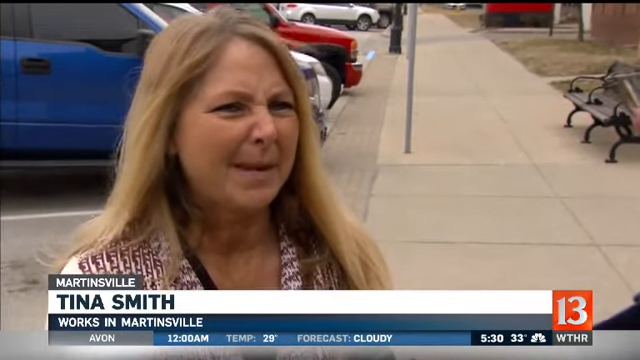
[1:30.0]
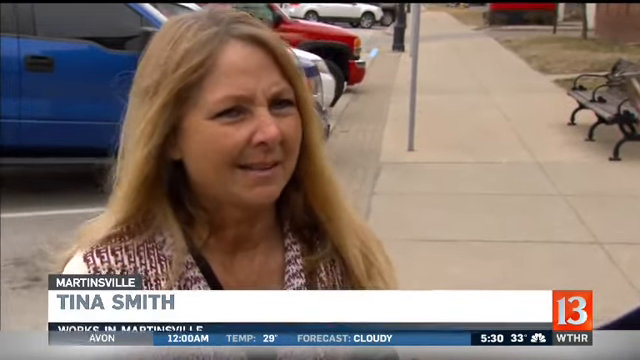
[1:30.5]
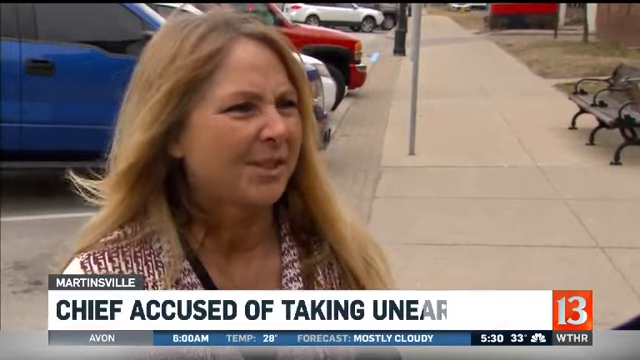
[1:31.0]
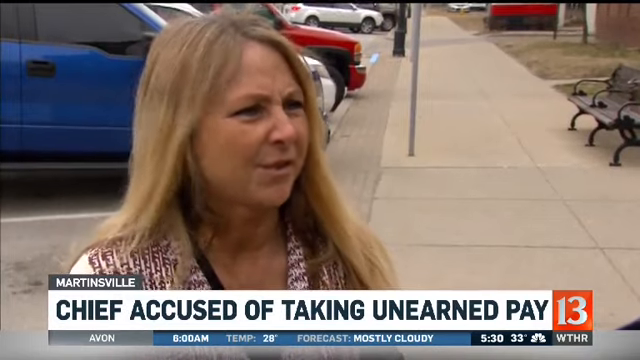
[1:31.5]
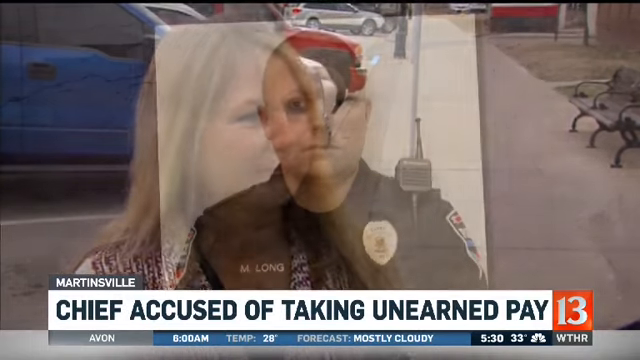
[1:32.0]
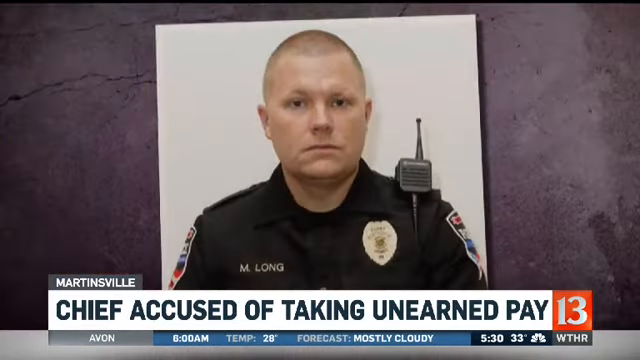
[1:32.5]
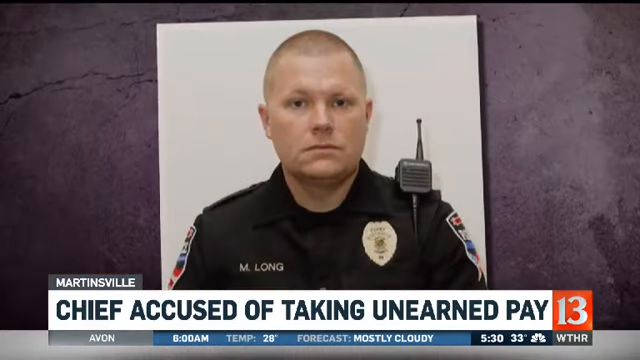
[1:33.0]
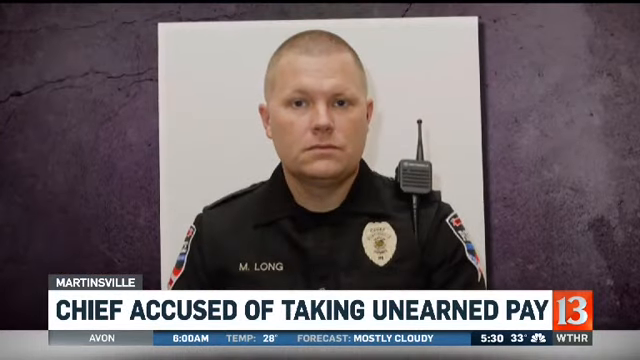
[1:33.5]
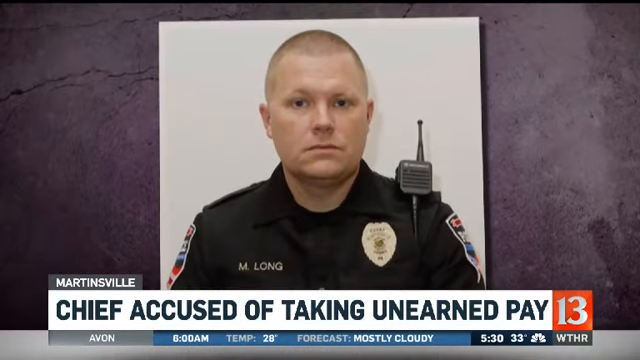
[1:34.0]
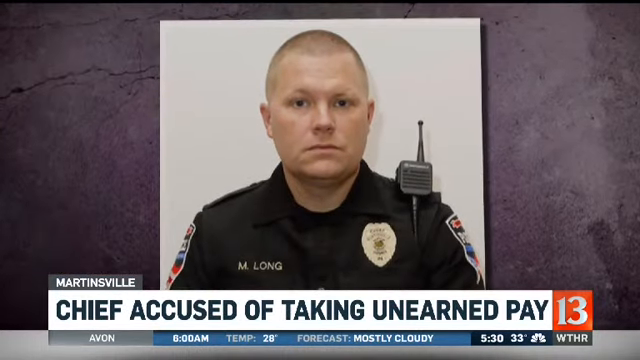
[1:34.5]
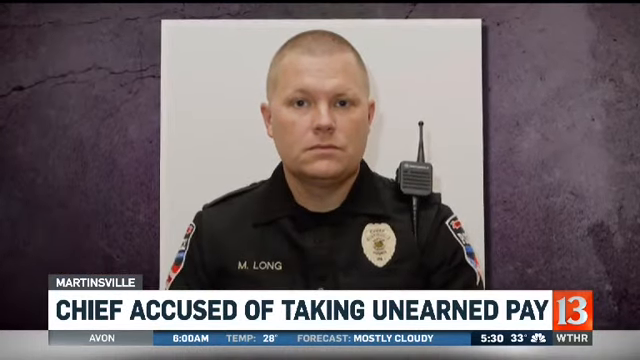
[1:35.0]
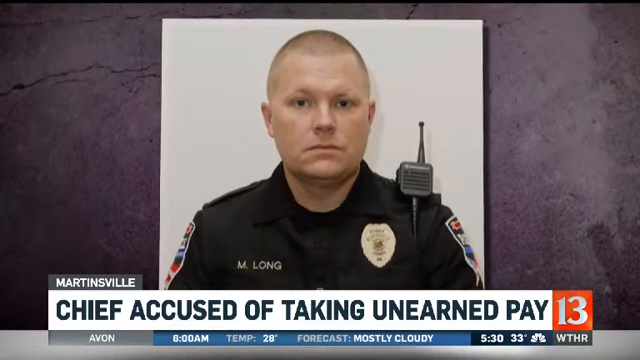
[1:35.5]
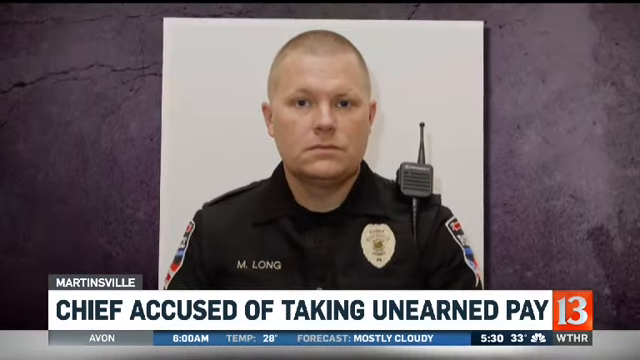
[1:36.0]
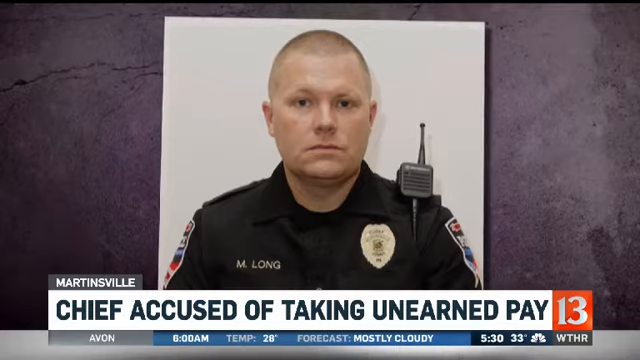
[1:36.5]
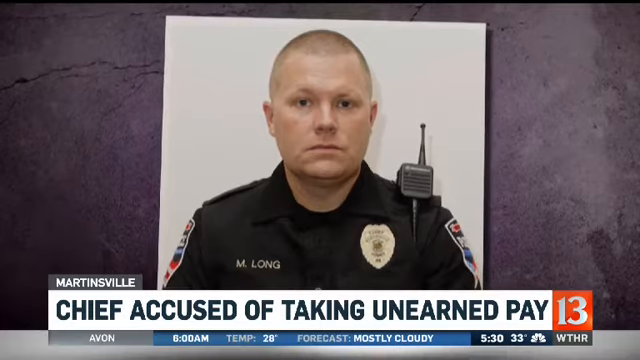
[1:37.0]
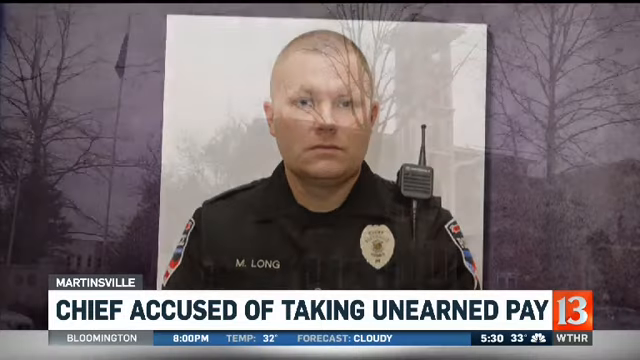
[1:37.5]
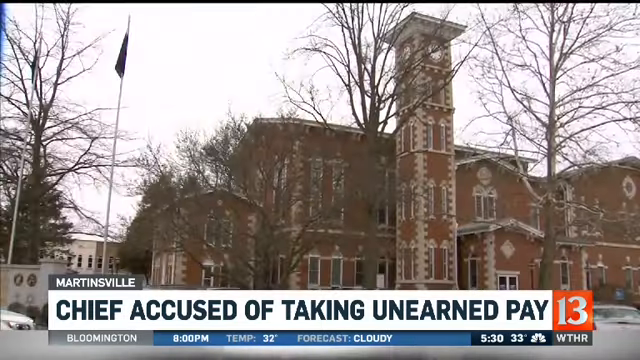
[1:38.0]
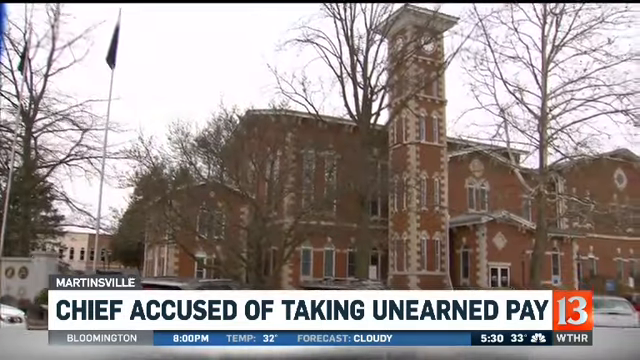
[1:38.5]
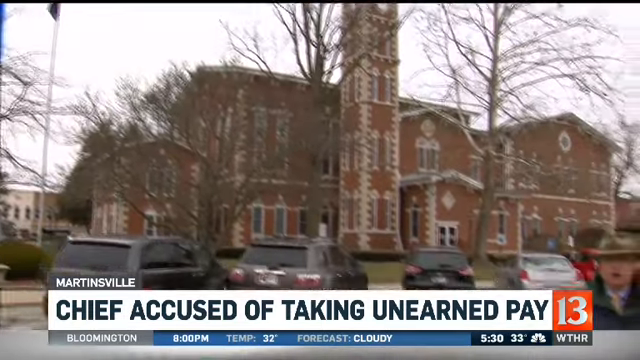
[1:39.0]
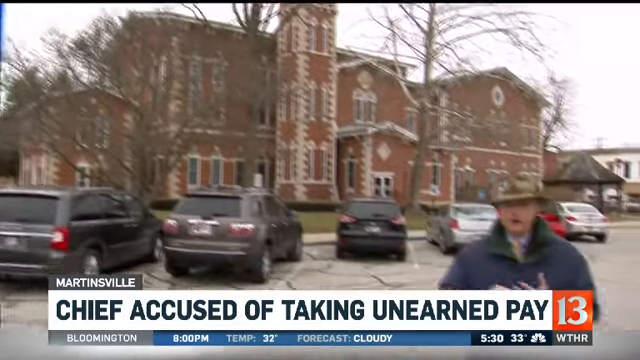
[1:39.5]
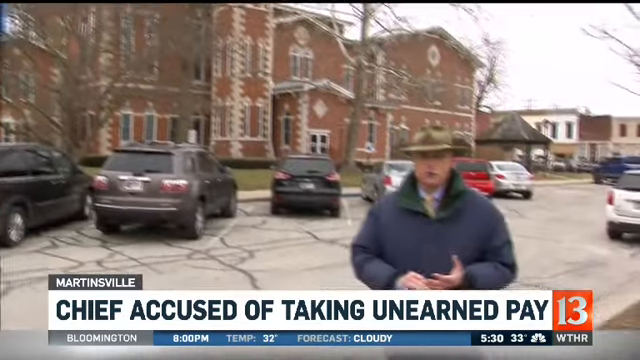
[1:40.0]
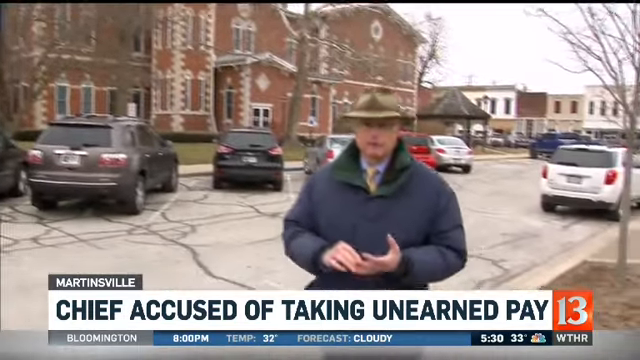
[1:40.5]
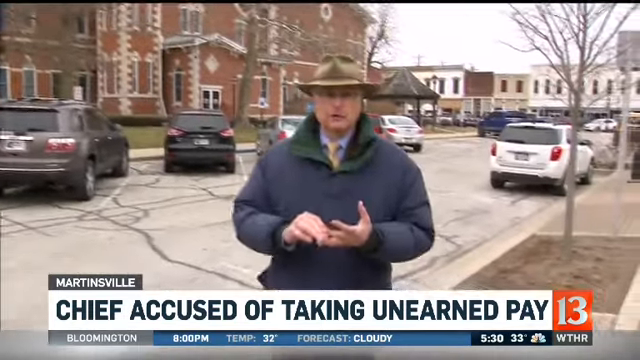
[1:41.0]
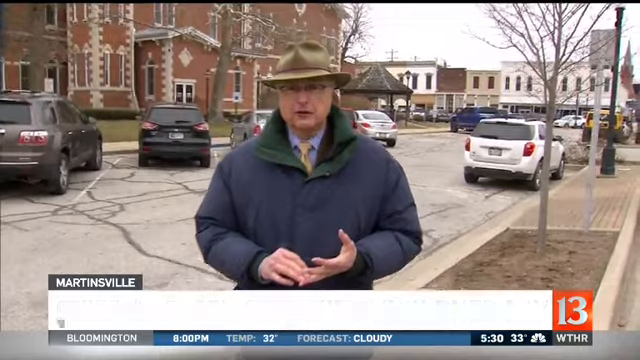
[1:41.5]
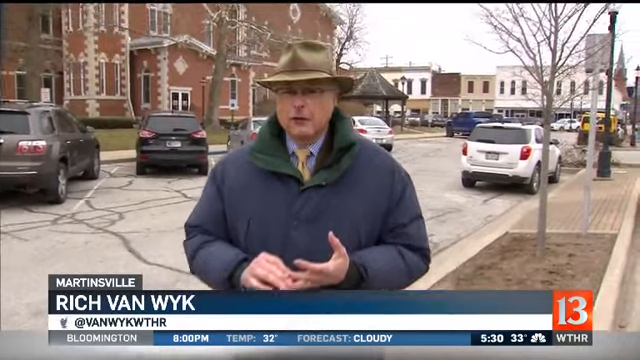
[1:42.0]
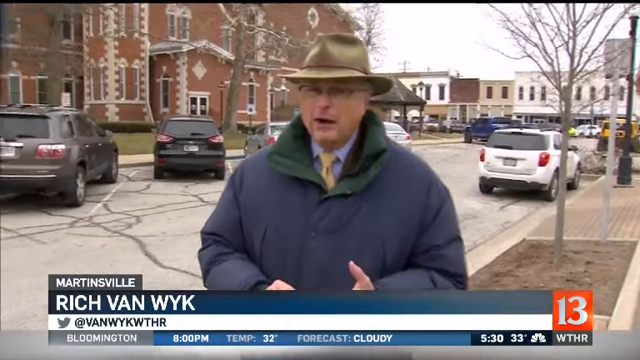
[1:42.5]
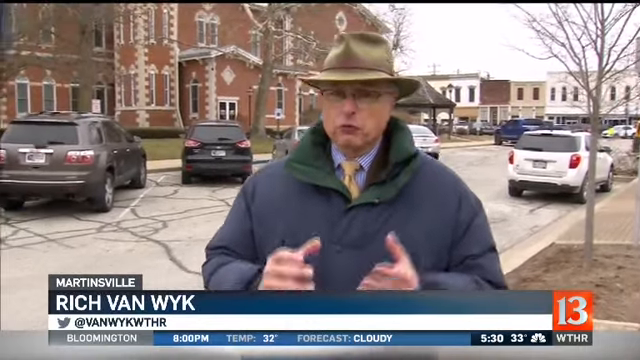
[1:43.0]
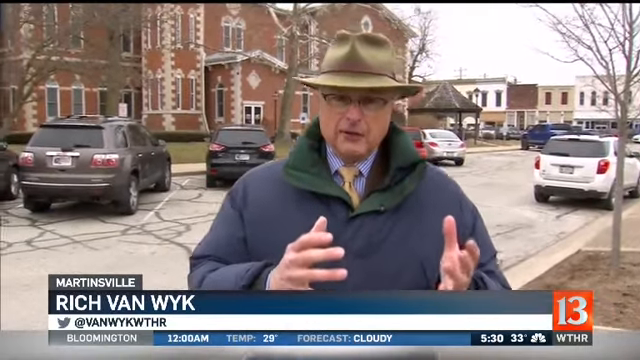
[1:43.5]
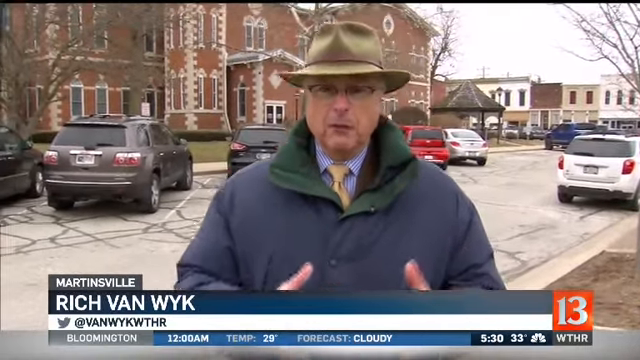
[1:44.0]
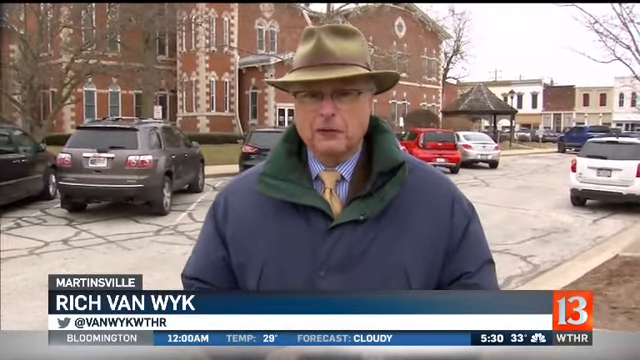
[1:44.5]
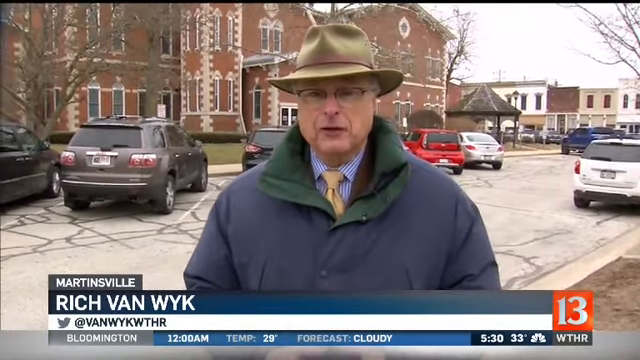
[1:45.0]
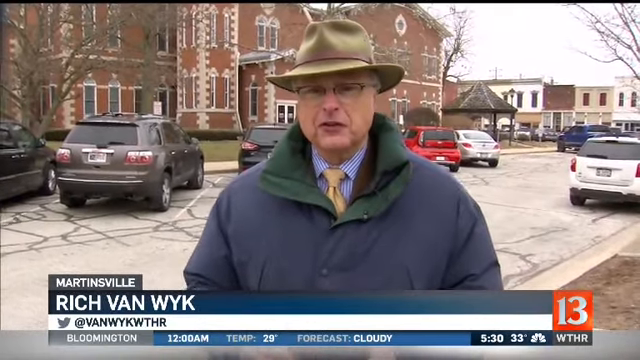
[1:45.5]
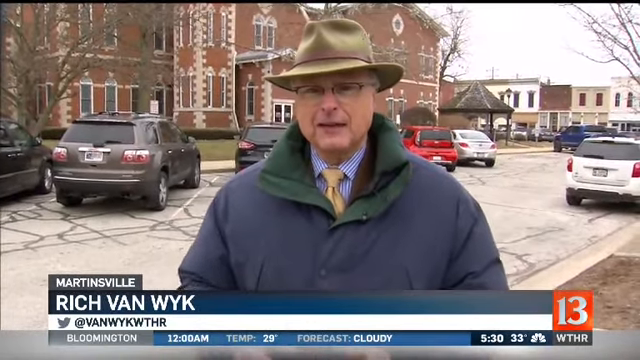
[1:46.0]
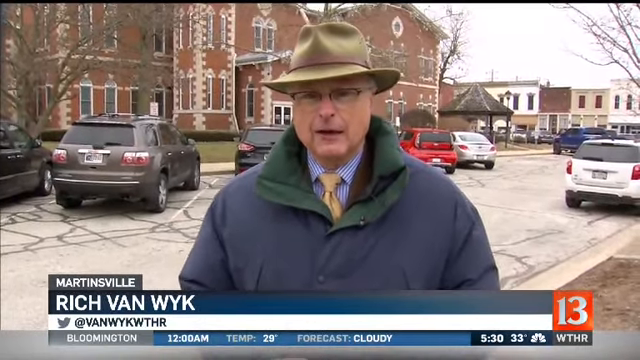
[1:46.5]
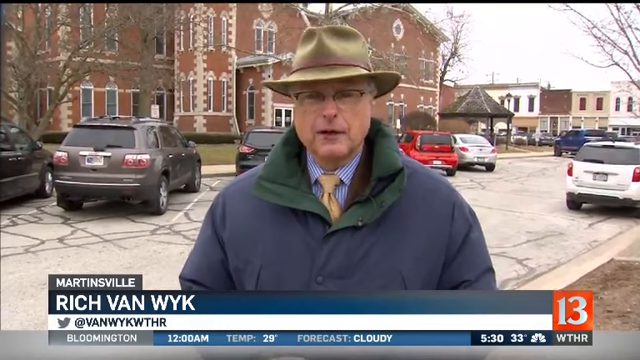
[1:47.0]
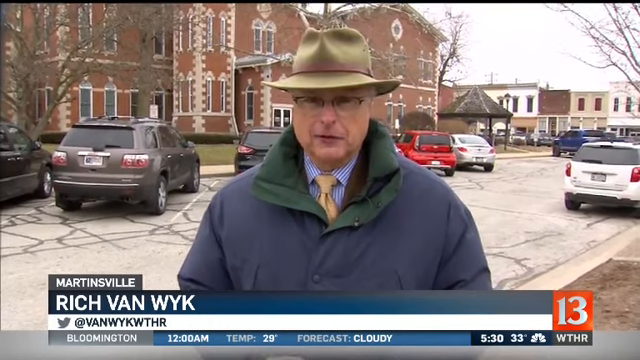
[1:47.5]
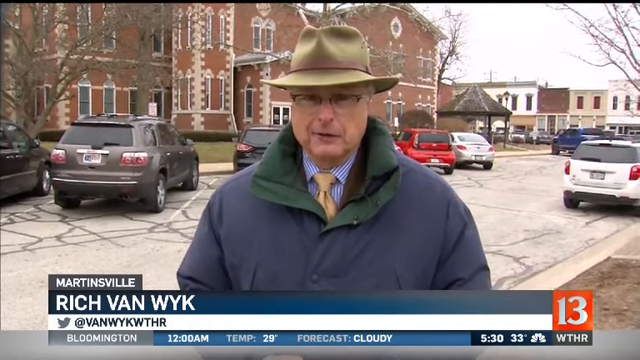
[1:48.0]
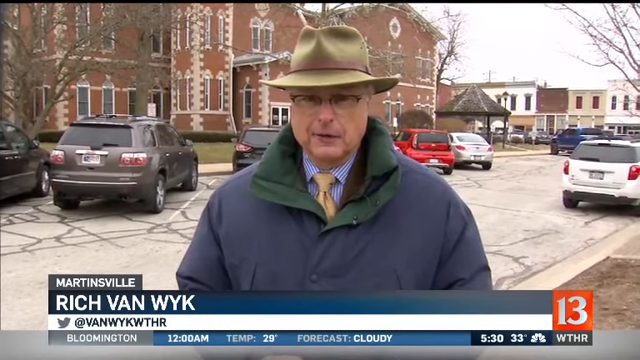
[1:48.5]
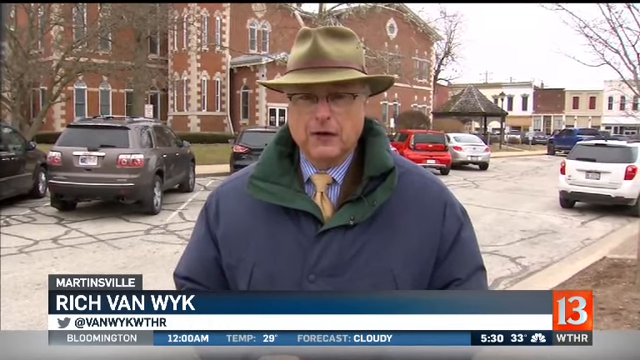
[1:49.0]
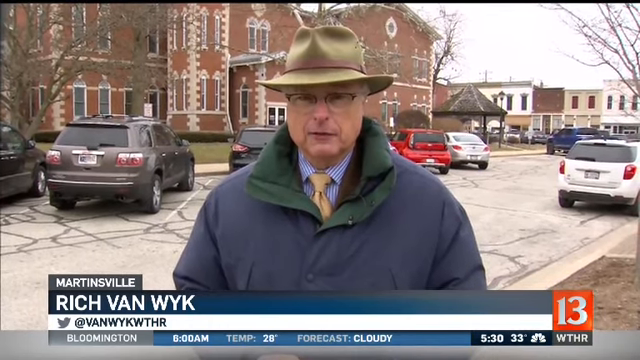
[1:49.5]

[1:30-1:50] The lady keeps talking, and a title at the bottom of the screen transitions to text beginning "chief accused of taking." The video cuts back to footage of the reporter, whose name is shown as Rich Van Wyk. He walks closer and closer to the camera, looking at it while walking and talking, and extends his hand toward the camera. On the right-hand side of the screen, right next to the title, is the number 13, possibly indicating channel 13. Behind the reporter is a red brick building and streets with a parking lot in view, holding many cars and vehicles: from left to right, a black car at the very left of the screen, a brown car slightly right of it, another black vehicle, a red vehicle, a white vehicle, a few vehicles in a parking lot, a blue vehicle, and, closer to the camera, another white vehicle.